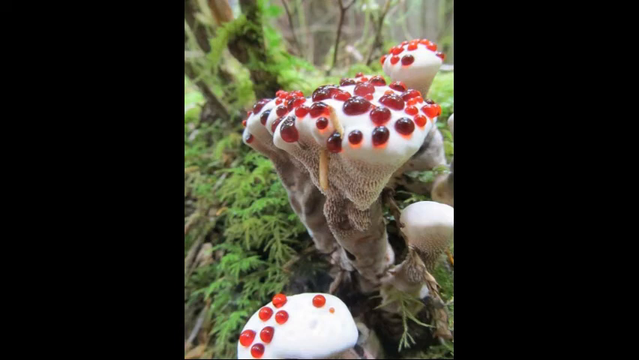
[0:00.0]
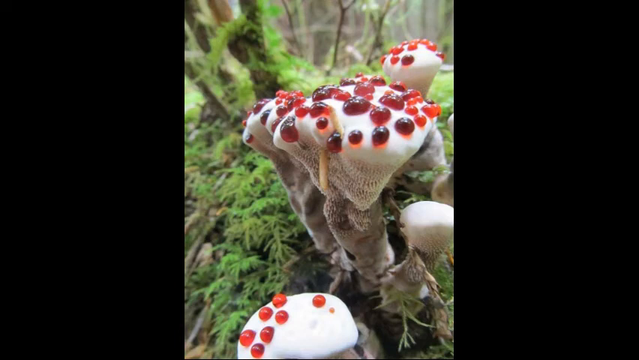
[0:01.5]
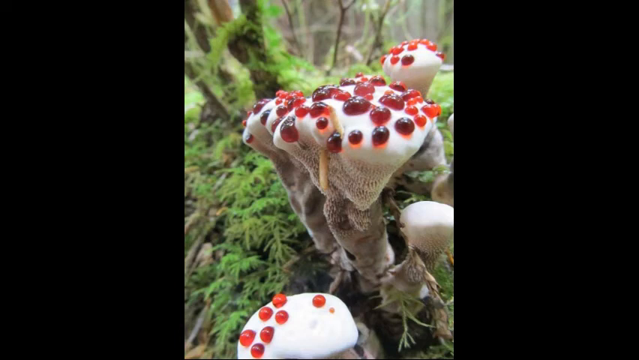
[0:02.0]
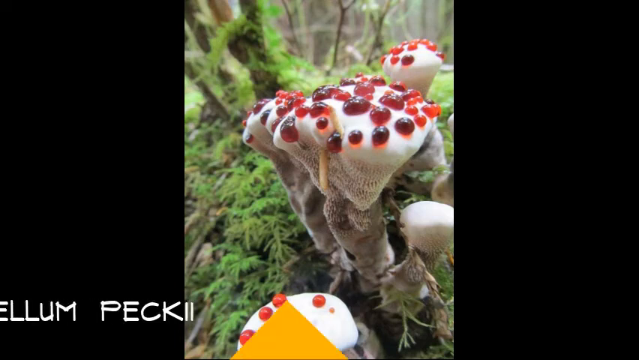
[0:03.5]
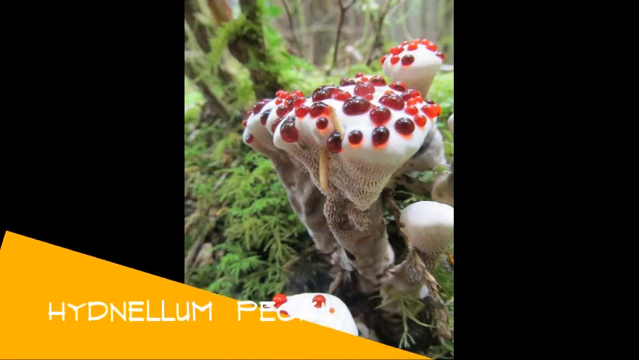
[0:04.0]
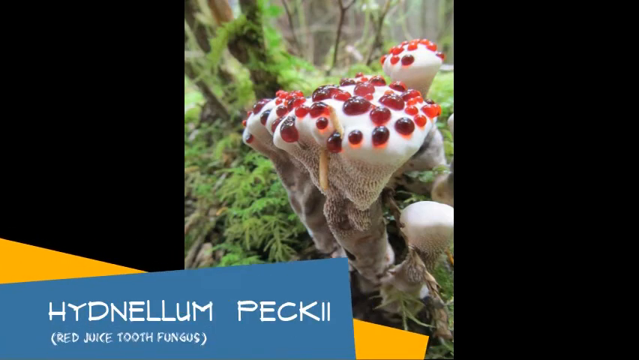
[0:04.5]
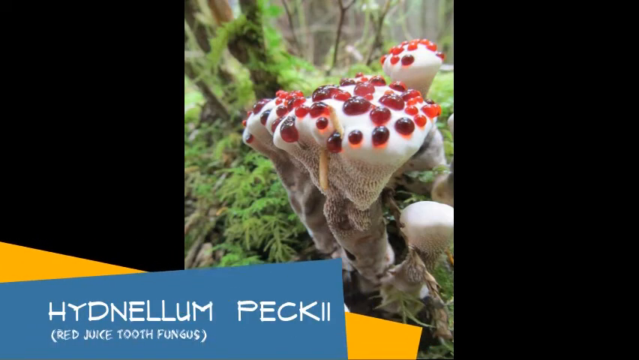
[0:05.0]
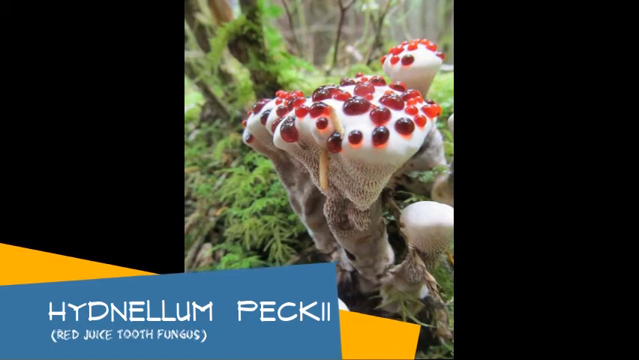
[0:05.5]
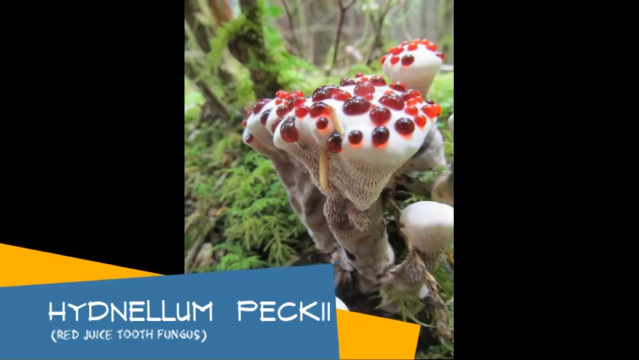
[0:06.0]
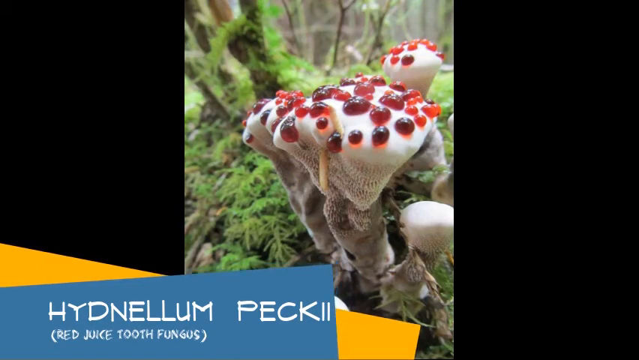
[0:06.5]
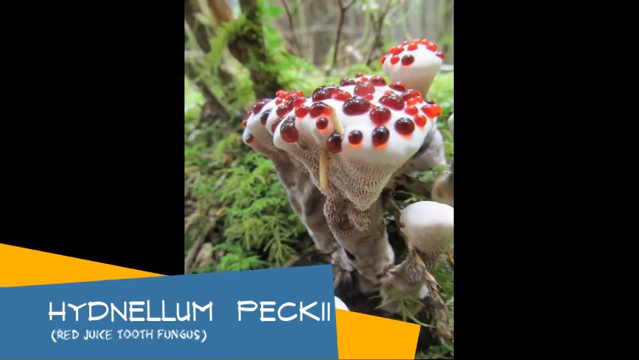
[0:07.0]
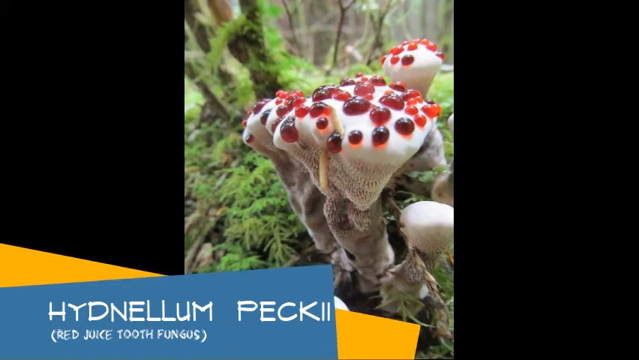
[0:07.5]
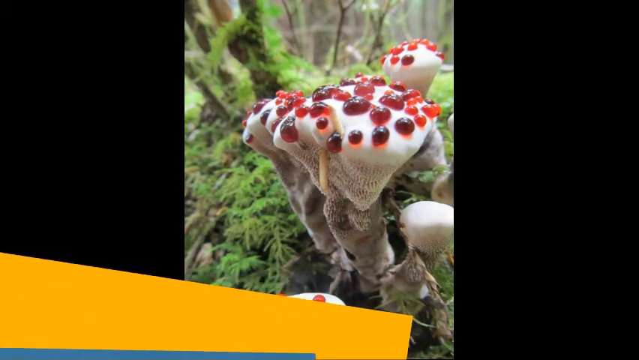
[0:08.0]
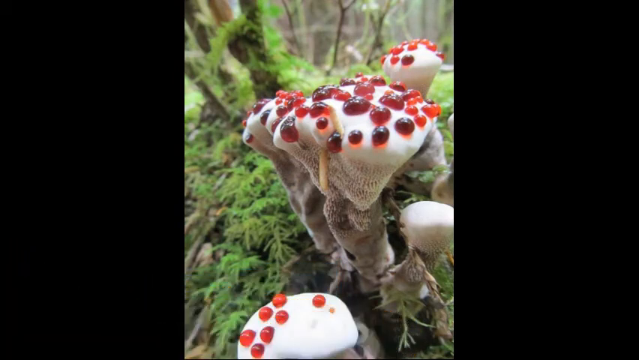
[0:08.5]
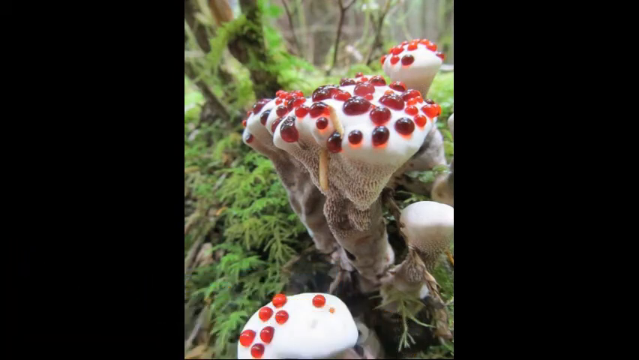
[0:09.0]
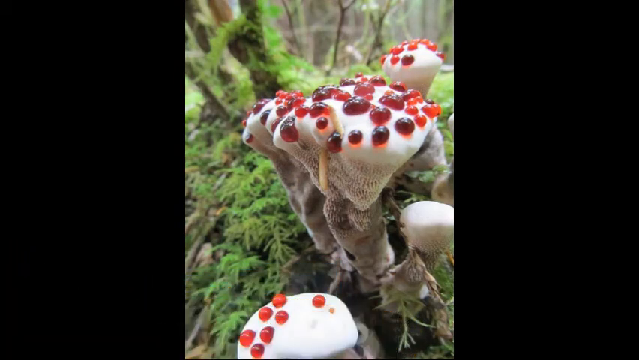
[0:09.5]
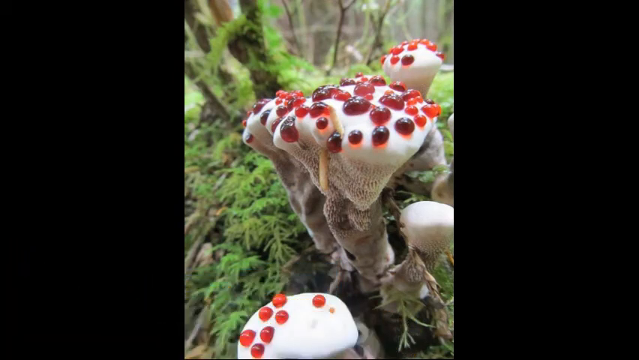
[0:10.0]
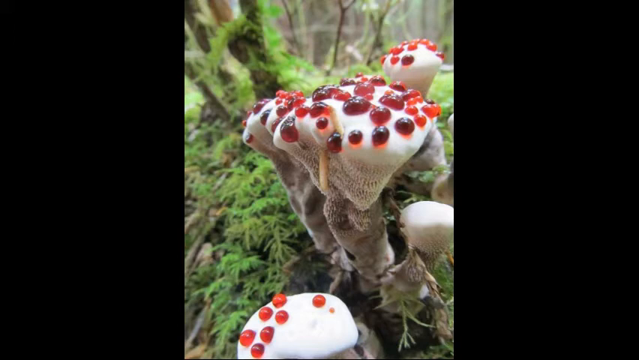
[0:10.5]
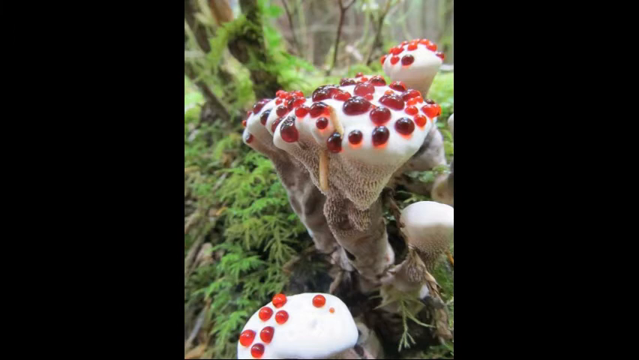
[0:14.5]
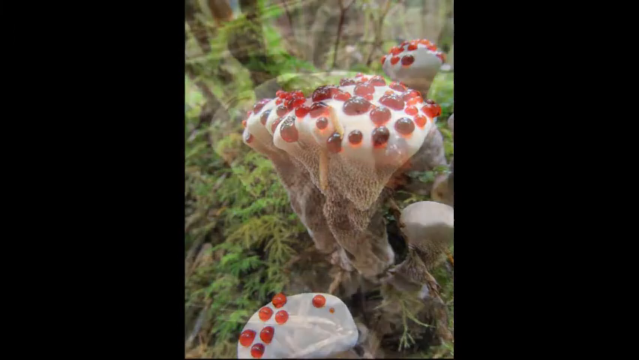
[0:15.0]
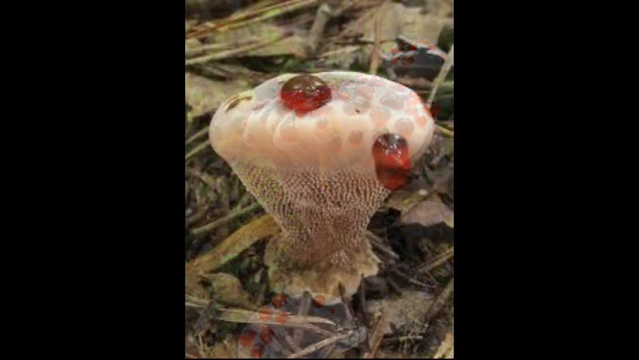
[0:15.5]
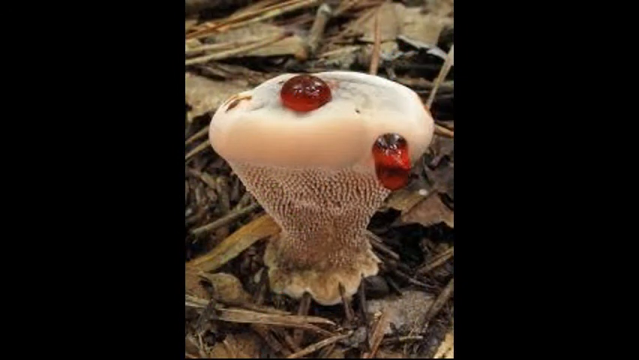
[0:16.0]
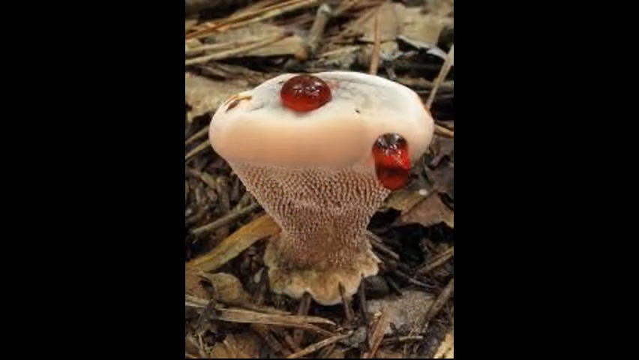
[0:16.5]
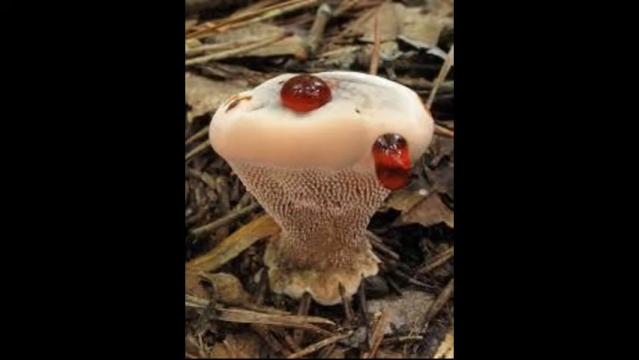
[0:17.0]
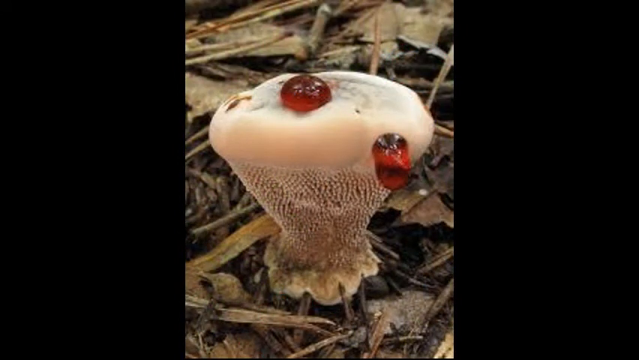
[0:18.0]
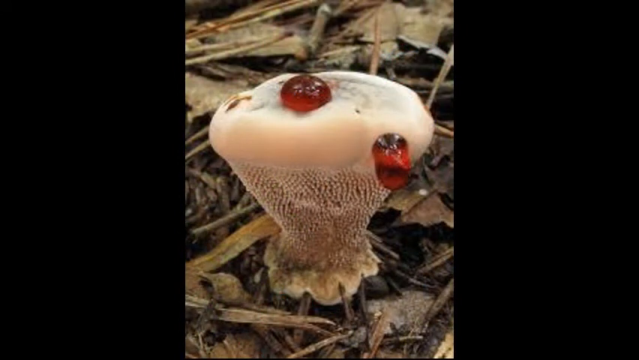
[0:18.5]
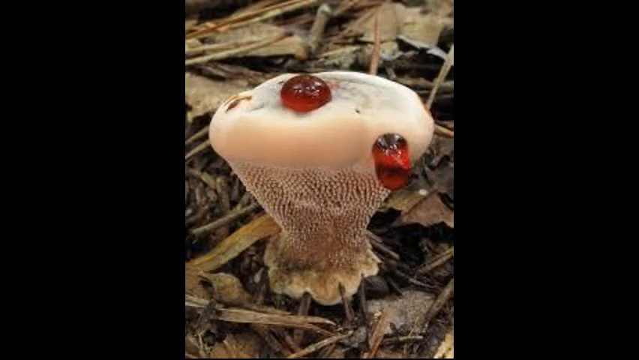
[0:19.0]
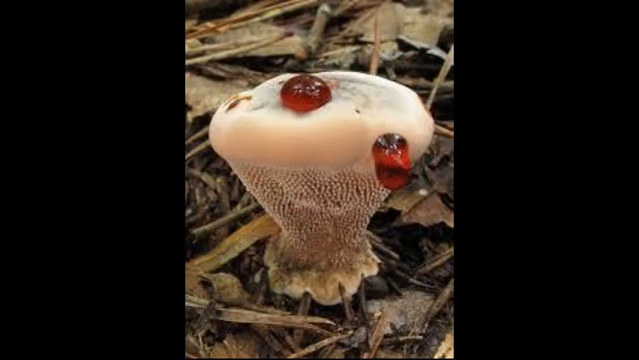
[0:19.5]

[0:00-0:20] A large group of wild fungi appears, large and white and grey in colour, with soft, liquid red blobs attached over the top part of the head. They grow in a forest with trees in the background, moss on the ground, and several twigs and other vegetation around. The fungus is large, white and grey, with a large, flat white head that has a number of large red blobs attached to it. In the bottom left-hand corner of the screen, in large white text, are the words "HYDNELLUM PECKII", the formal name of the fungus, and underneath is its more common name, "Red juice tooth fungus".